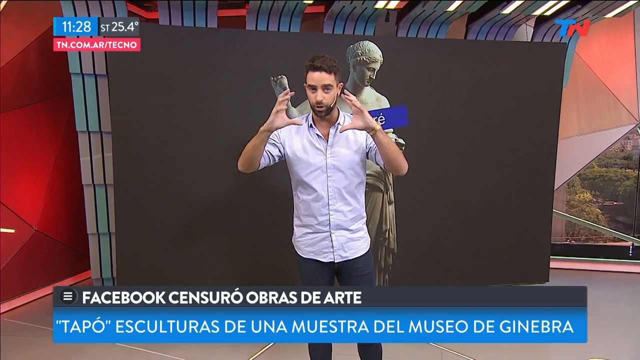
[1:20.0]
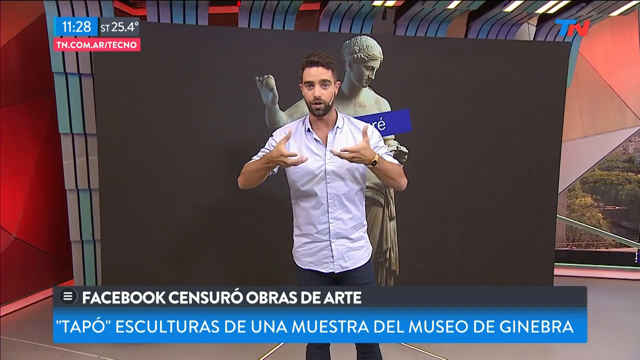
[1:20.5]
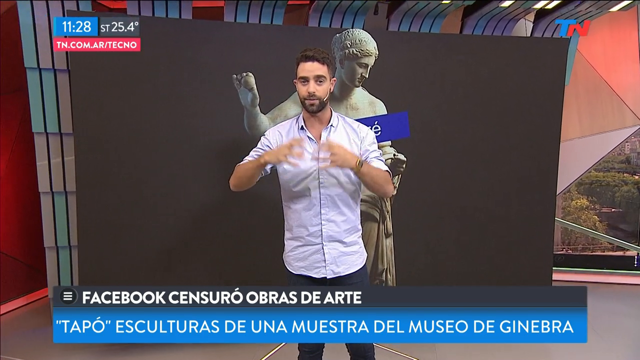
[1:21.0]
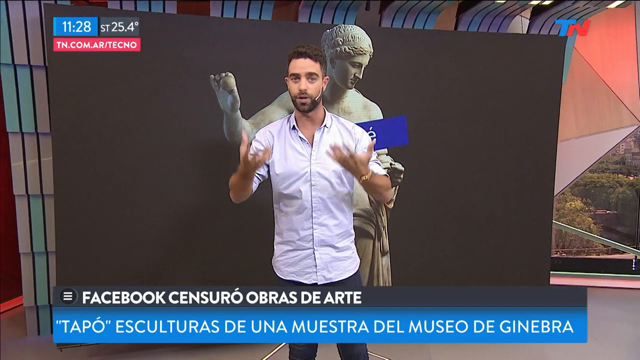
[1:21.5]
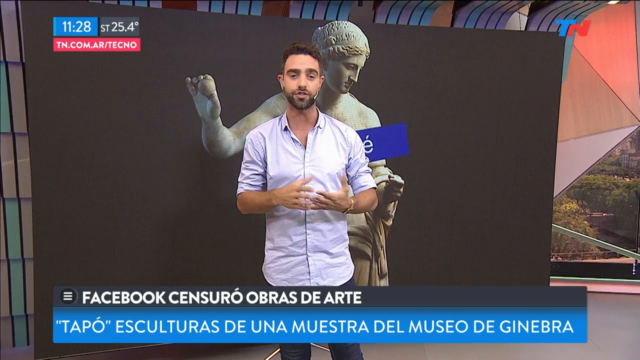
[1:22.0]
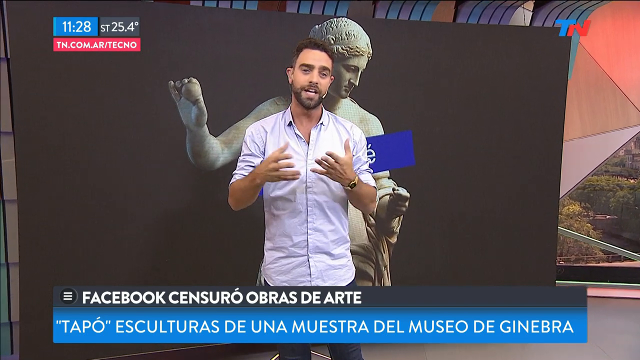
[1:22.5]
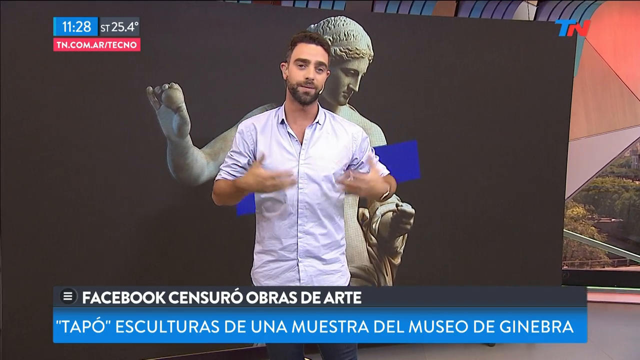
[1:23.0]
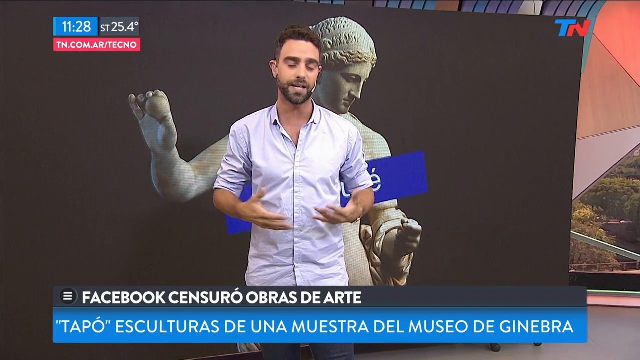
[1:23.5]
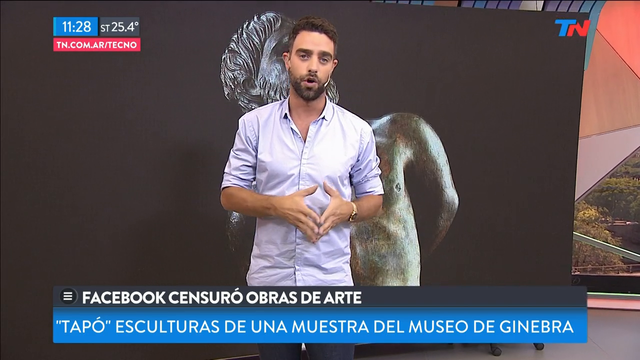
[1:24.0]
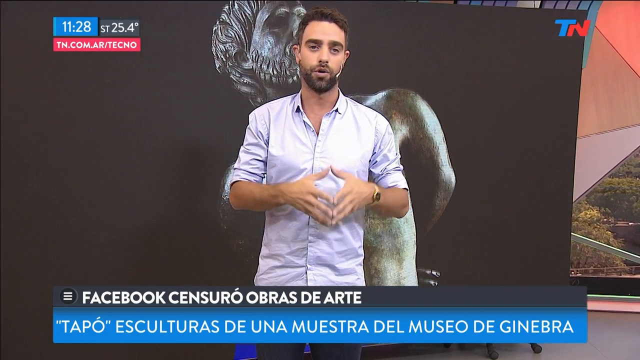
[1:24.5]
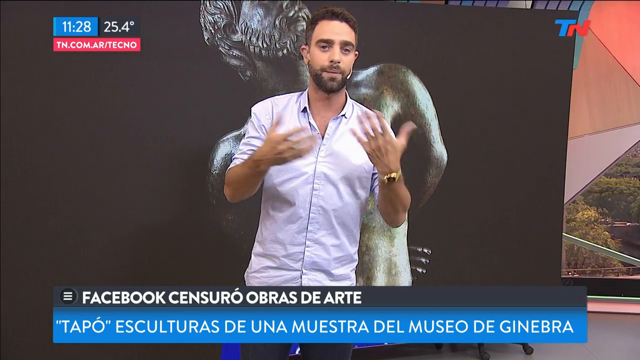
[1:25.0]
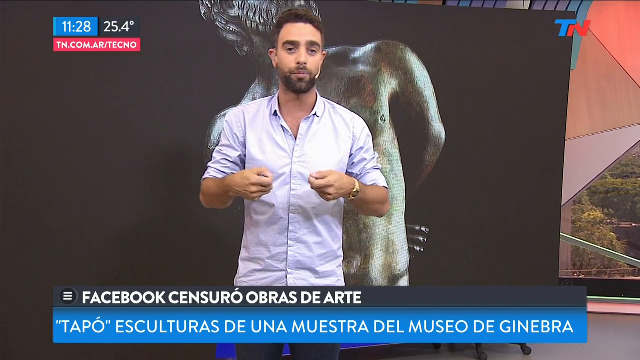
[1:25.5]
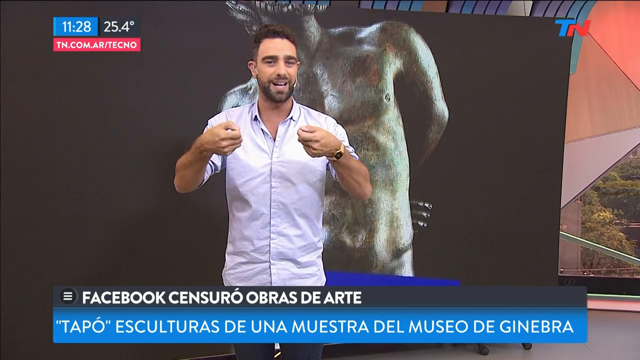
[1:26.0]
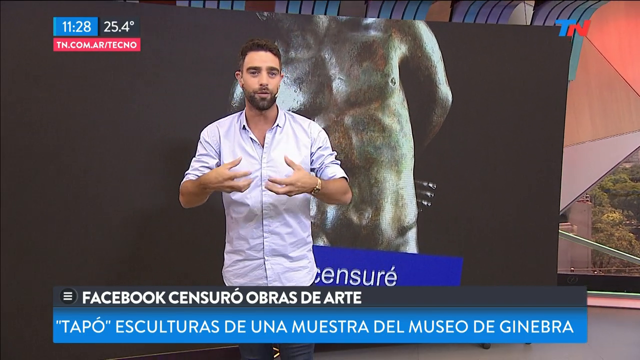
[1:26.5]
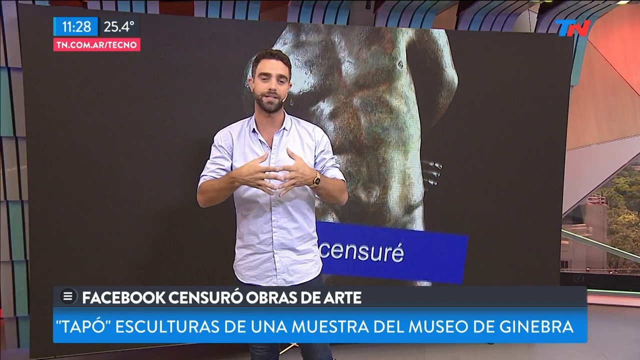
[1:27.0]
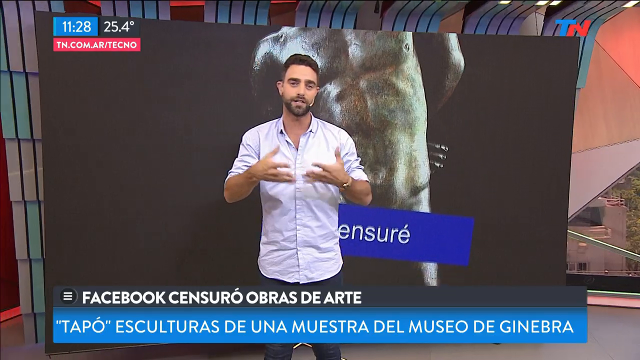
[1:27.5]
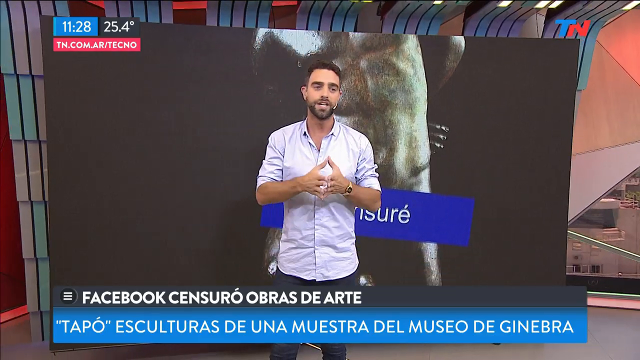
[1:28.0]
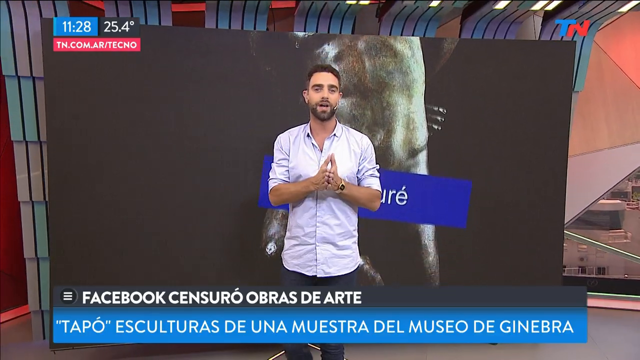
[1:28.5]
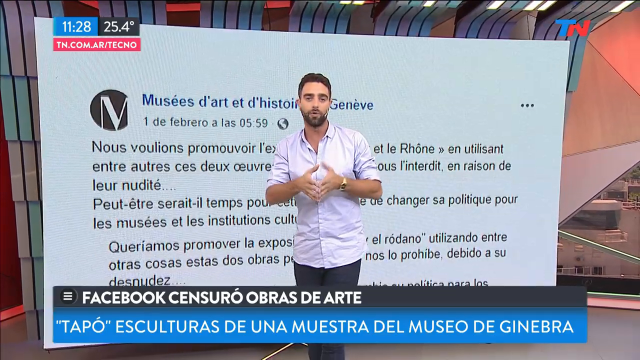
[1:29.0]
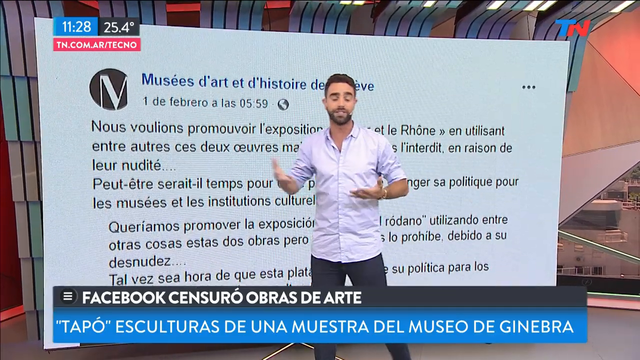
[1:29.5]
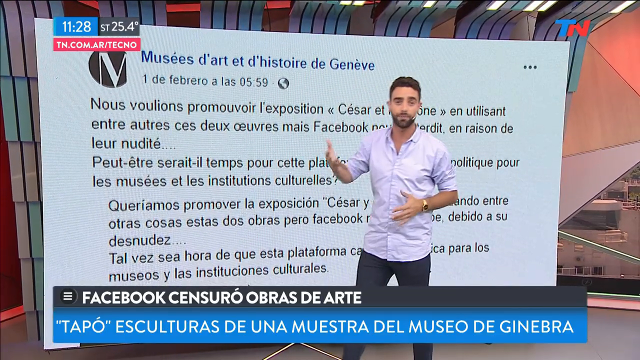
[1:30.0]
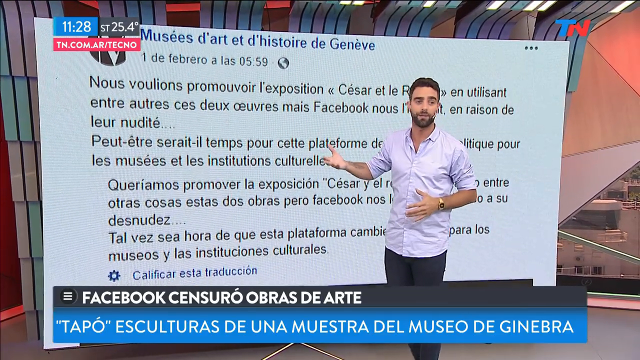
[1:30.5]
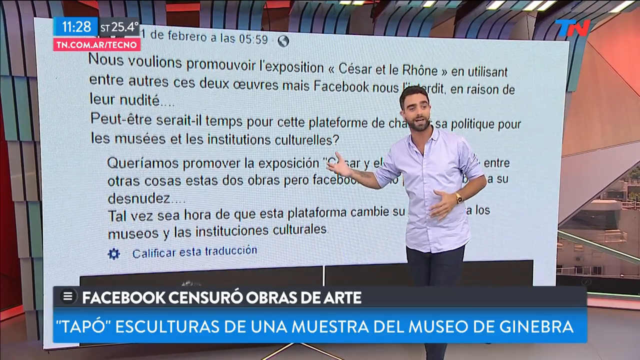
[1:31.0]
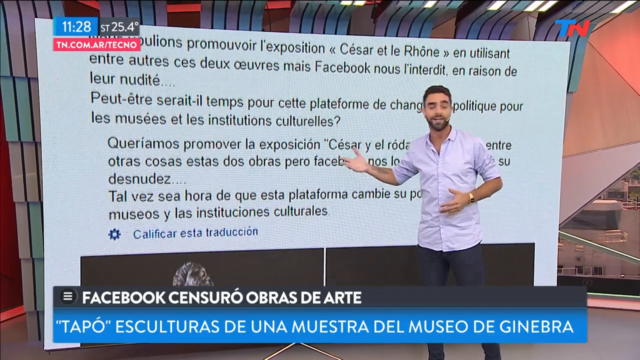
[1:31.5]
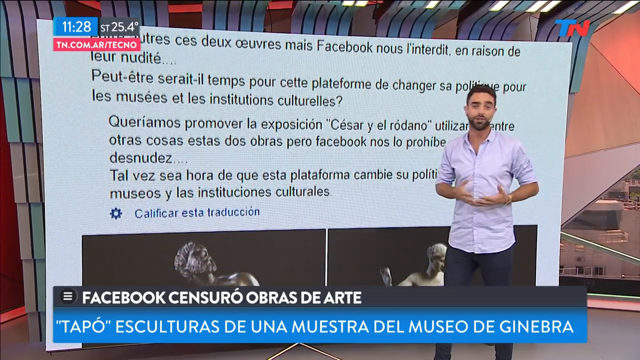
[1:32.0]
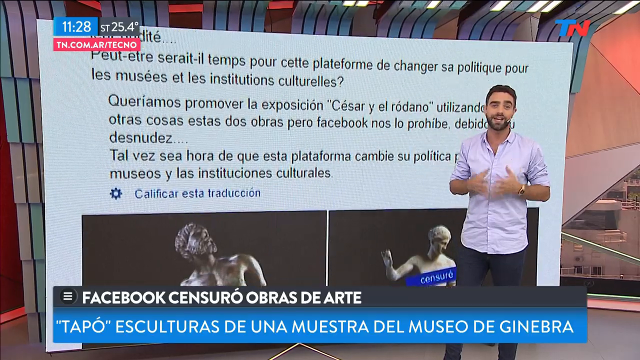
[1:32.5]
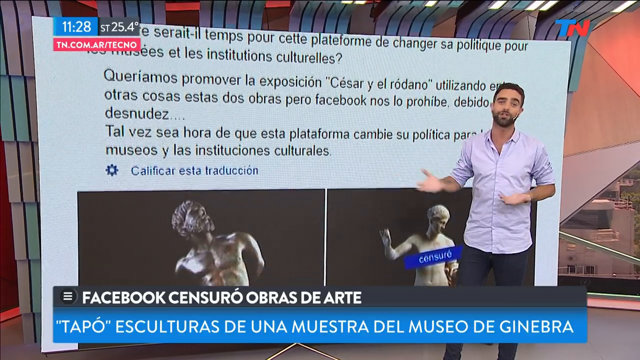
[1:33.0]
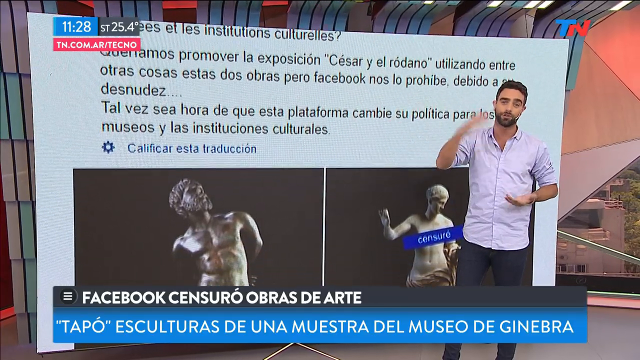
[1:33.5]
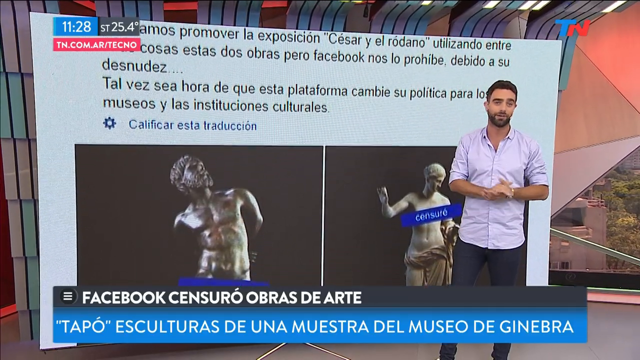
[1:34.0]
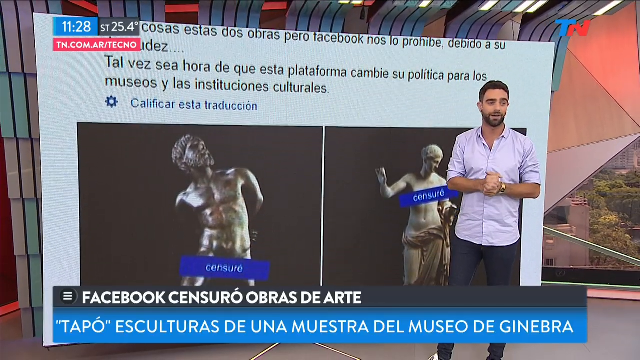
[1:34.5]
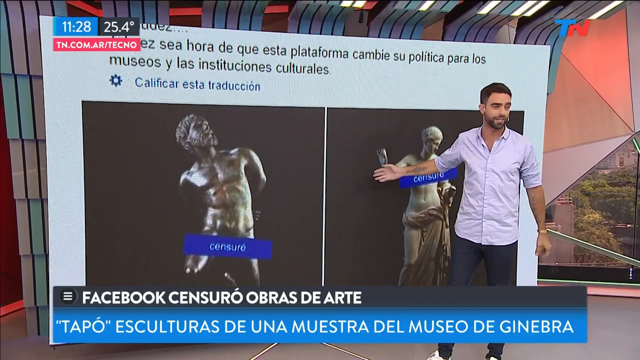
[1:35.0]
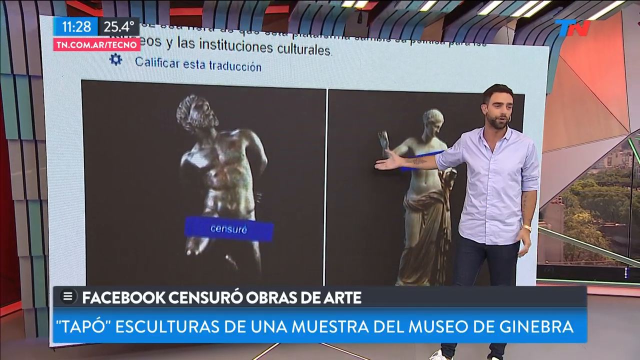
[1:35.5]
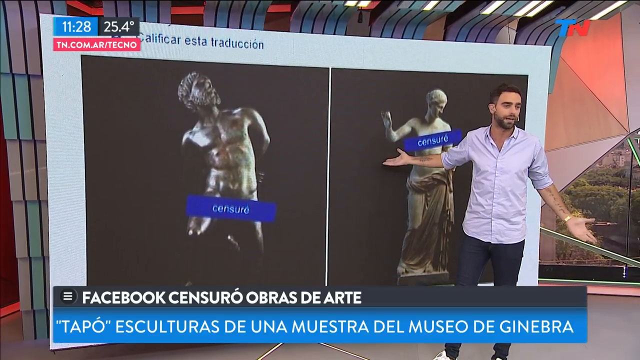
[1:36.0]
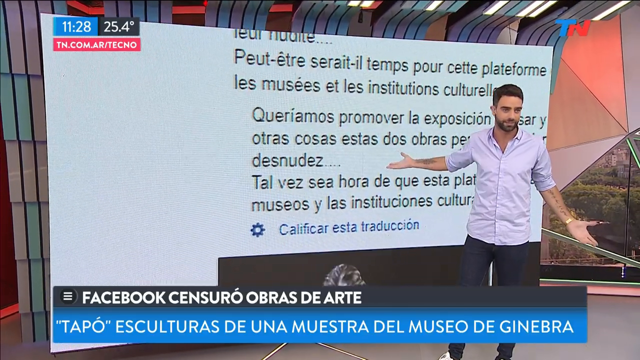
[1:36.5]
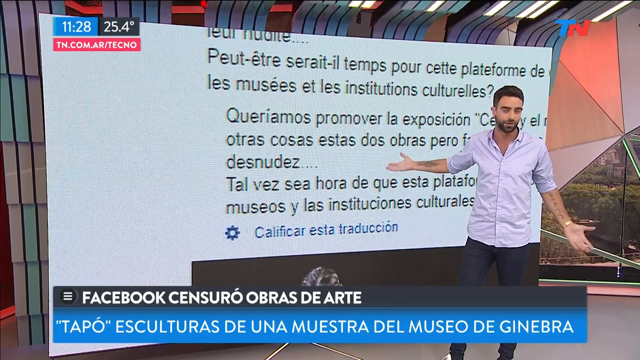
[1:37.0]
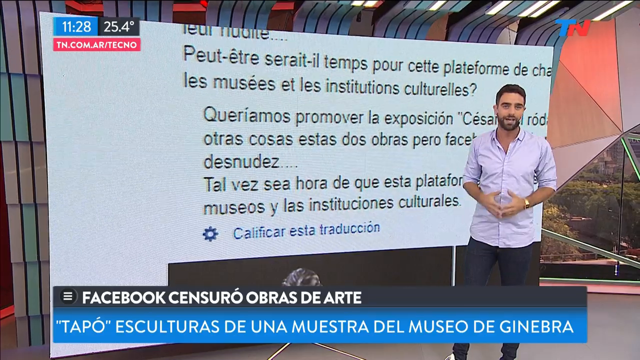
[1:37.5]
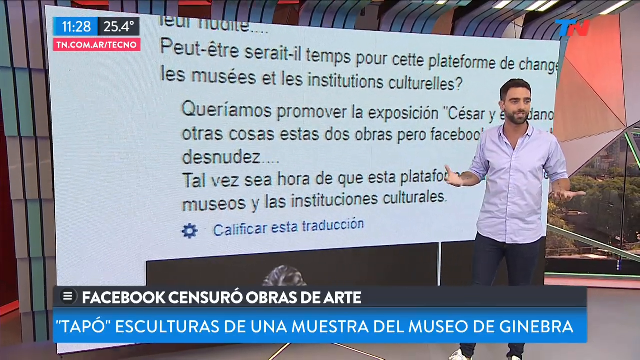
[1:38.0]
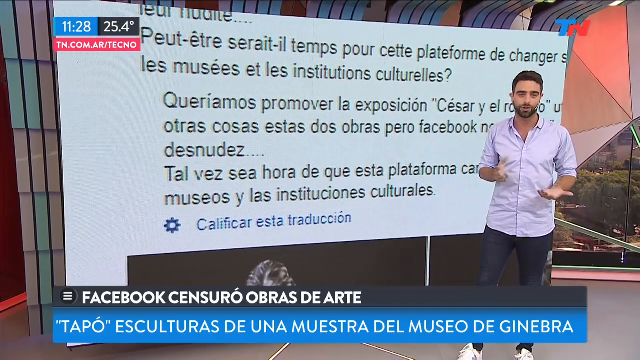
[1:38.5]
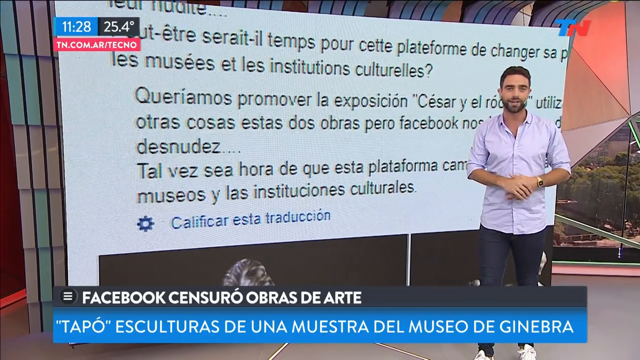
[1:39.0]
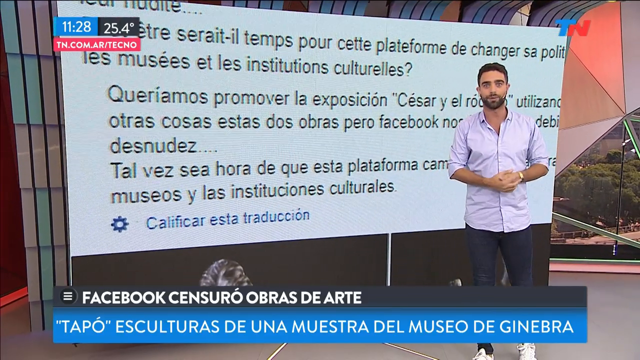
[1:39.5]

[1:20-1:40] The camera moves away and then closer to the screen as the man continuously describes the statues and the information on the screen. The background looks like a well-decorated studio with pink decoration. Behind the man, the statues and information keep moving on the screen, up, sideways and down, like a screensaver on an idle computer monitor. The man uses hand gestures and facial expressions as he explains, and he has a microphone at his mouth.